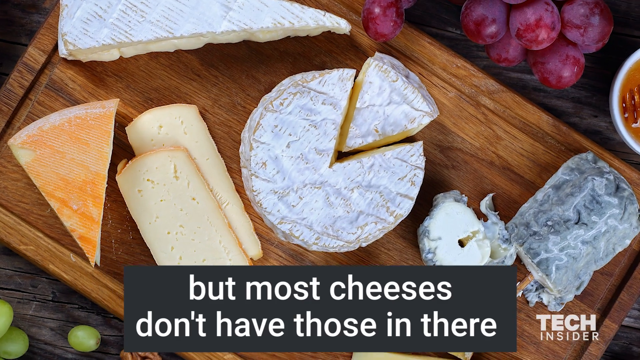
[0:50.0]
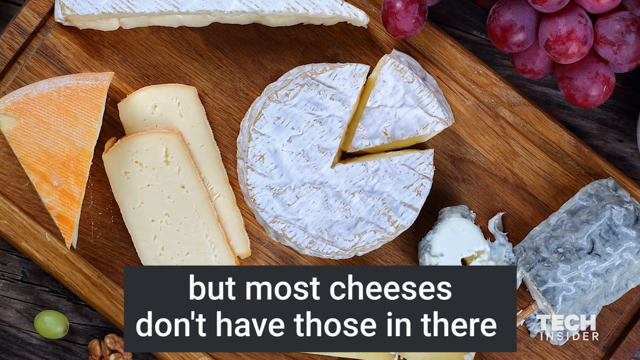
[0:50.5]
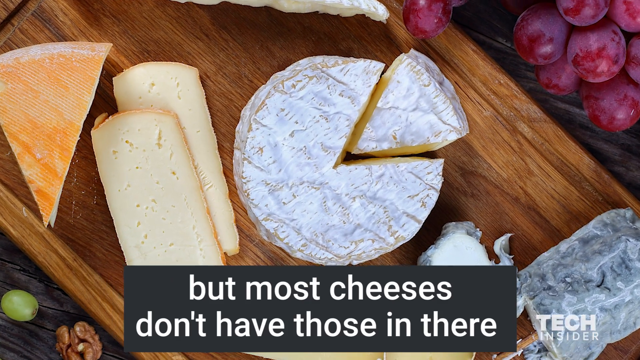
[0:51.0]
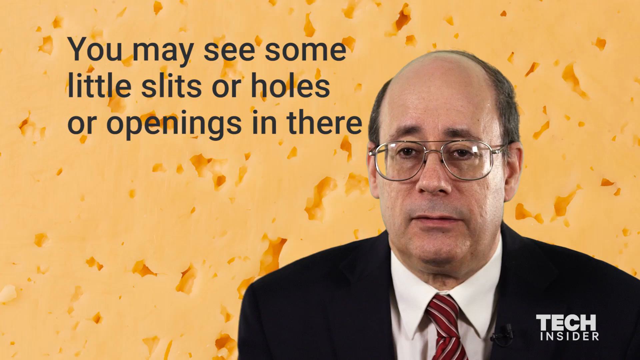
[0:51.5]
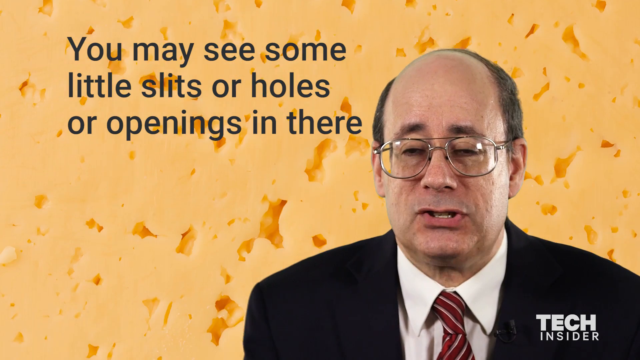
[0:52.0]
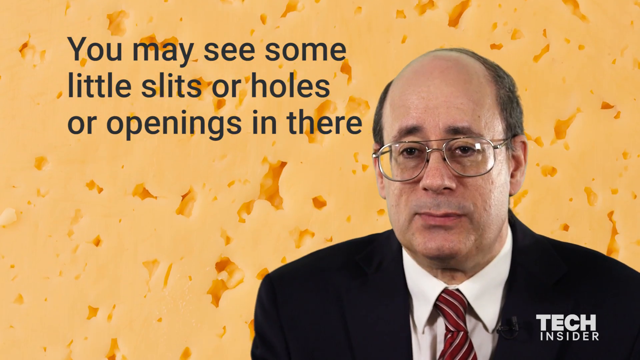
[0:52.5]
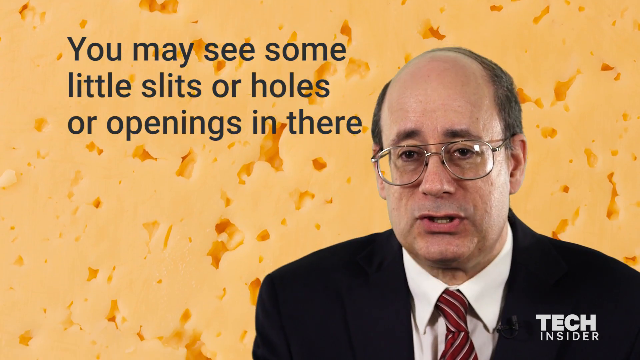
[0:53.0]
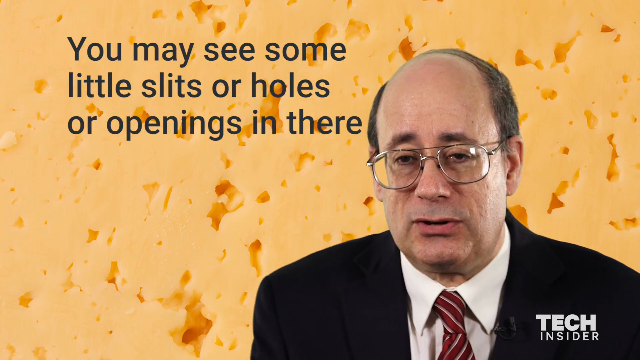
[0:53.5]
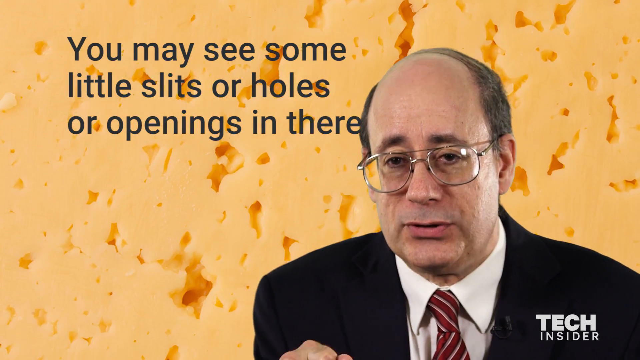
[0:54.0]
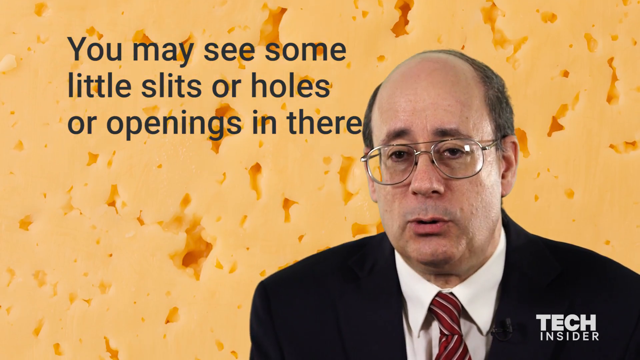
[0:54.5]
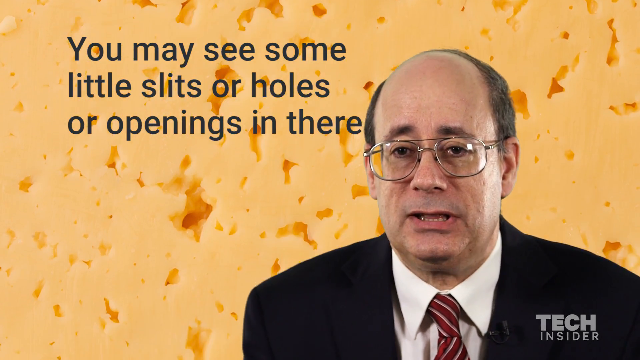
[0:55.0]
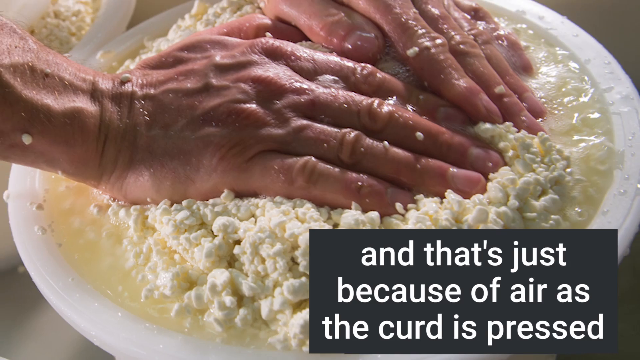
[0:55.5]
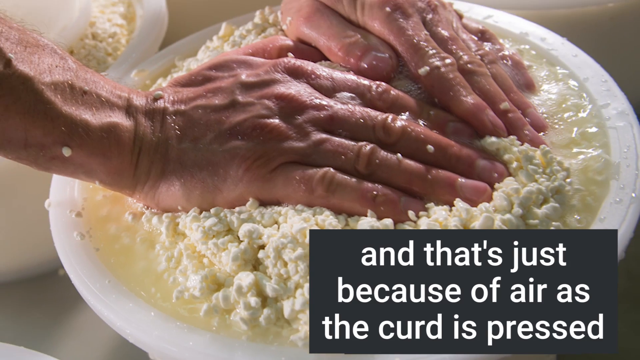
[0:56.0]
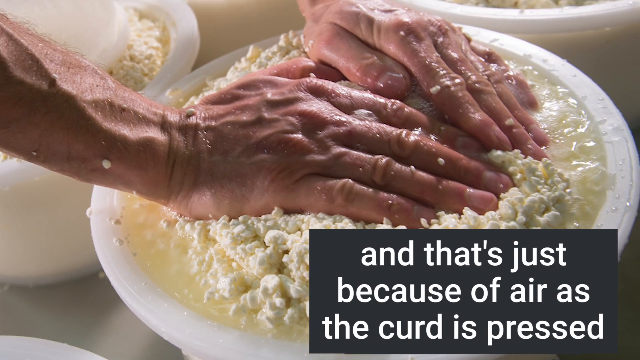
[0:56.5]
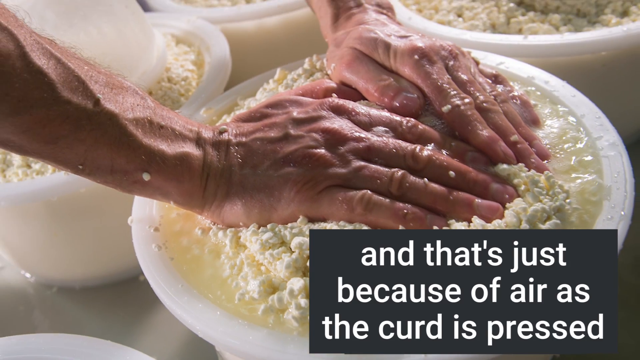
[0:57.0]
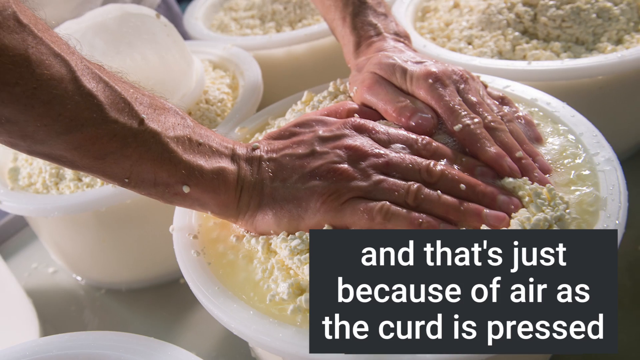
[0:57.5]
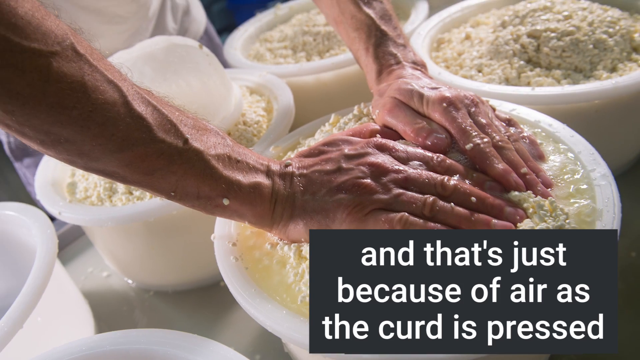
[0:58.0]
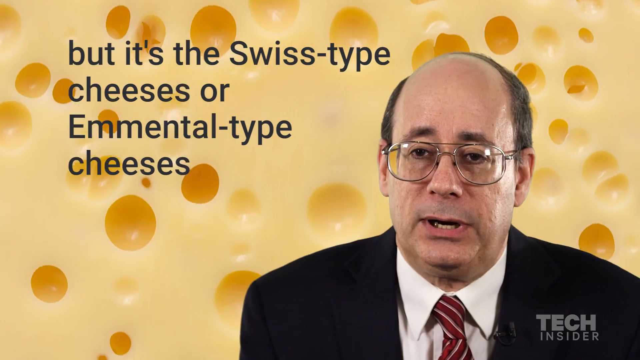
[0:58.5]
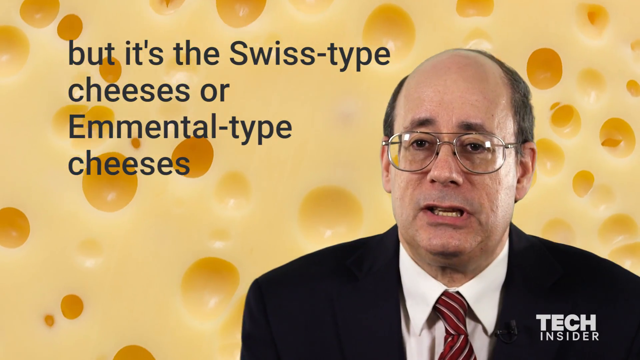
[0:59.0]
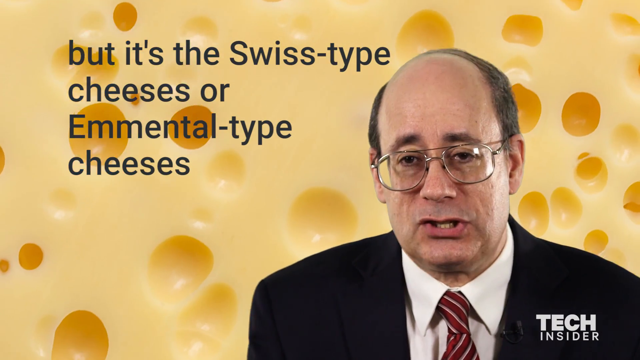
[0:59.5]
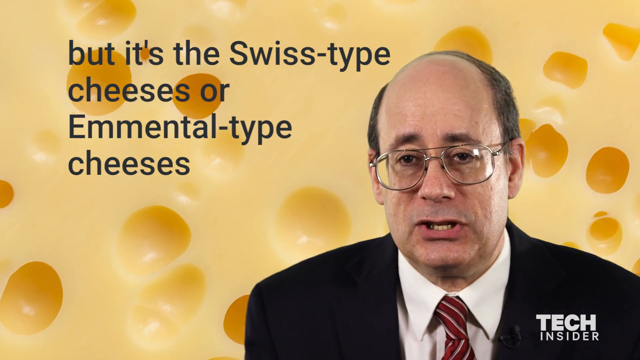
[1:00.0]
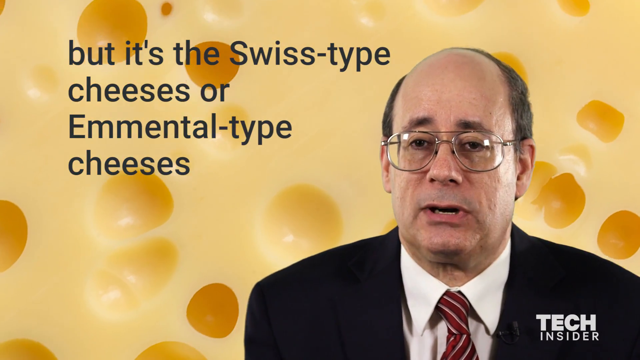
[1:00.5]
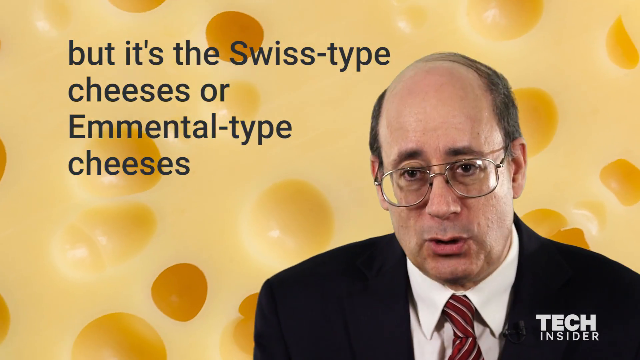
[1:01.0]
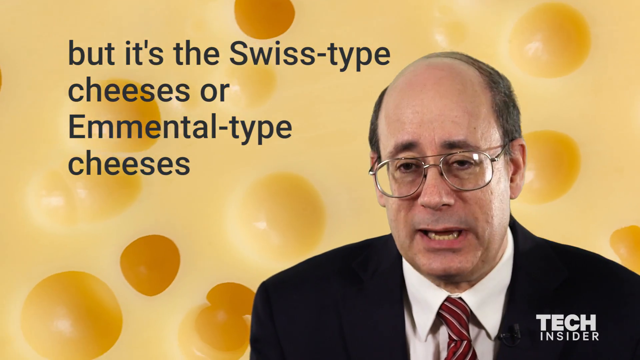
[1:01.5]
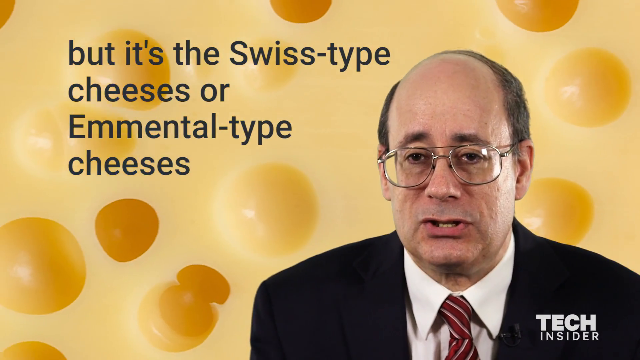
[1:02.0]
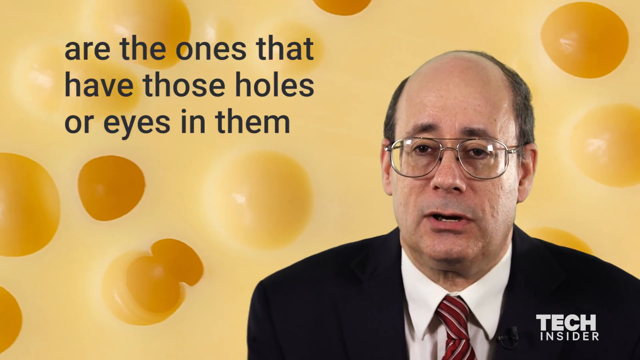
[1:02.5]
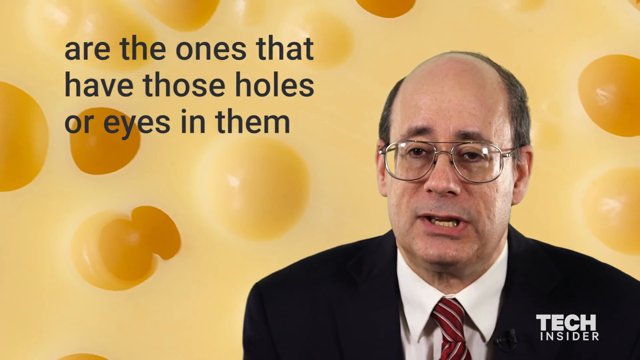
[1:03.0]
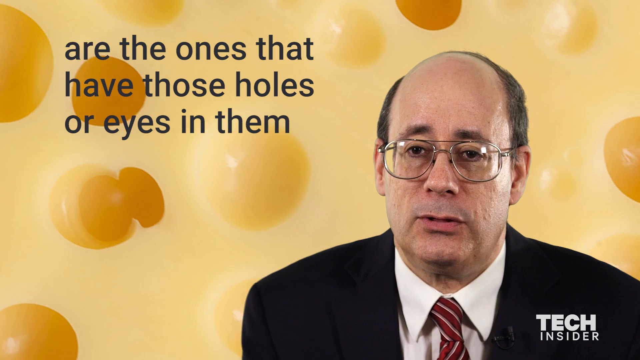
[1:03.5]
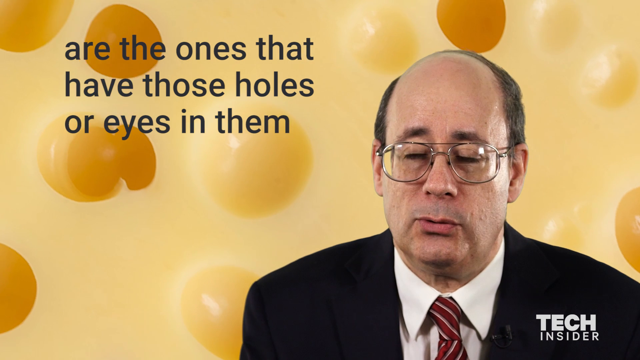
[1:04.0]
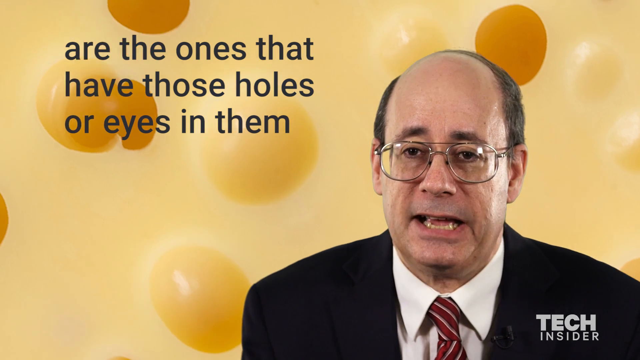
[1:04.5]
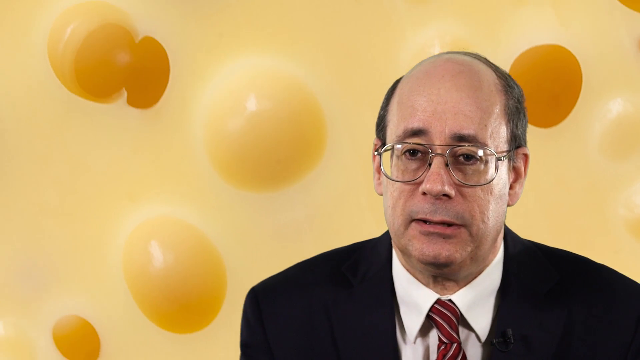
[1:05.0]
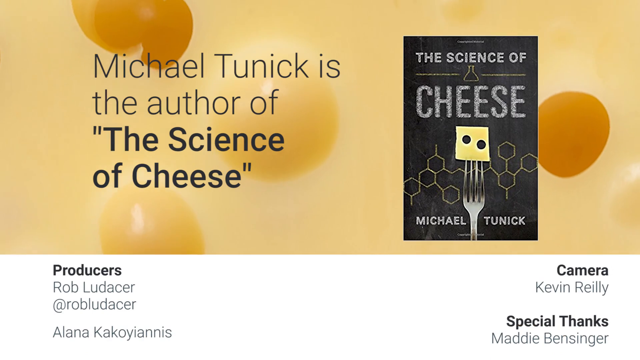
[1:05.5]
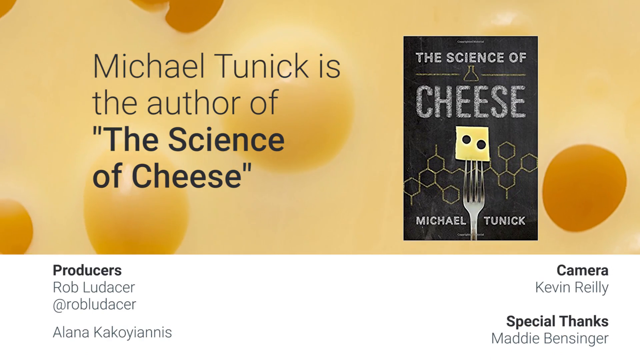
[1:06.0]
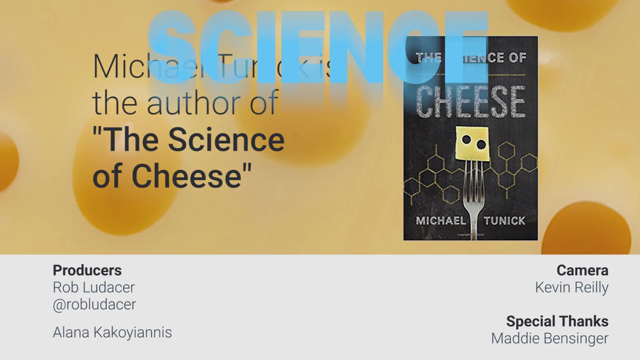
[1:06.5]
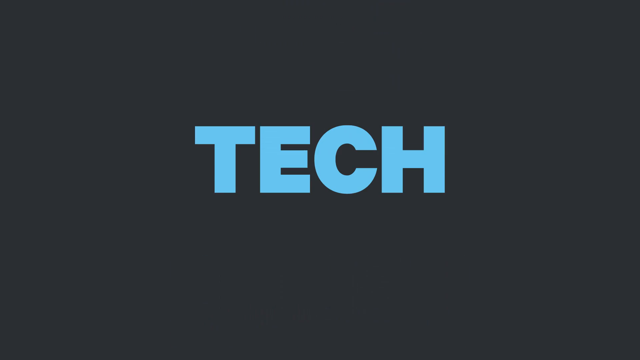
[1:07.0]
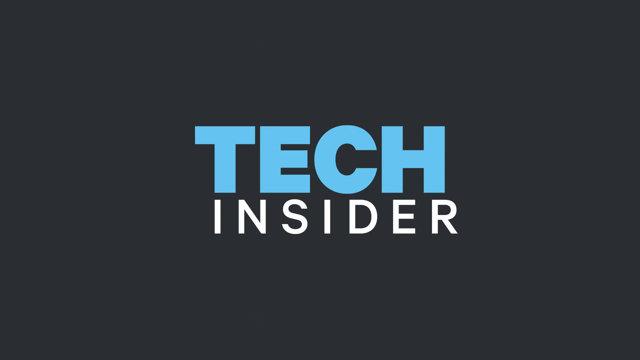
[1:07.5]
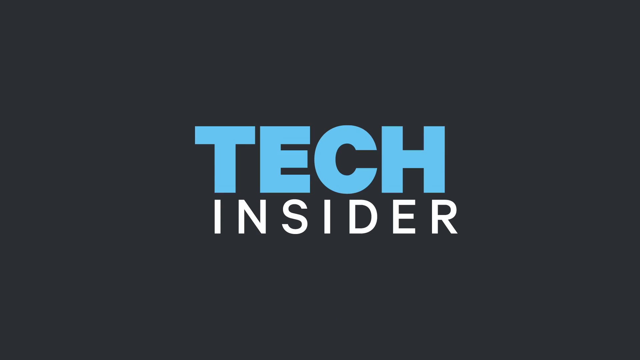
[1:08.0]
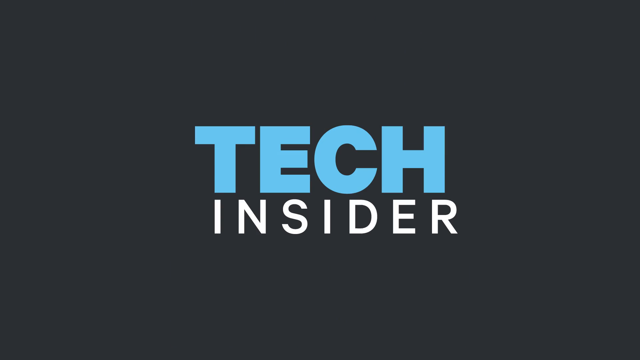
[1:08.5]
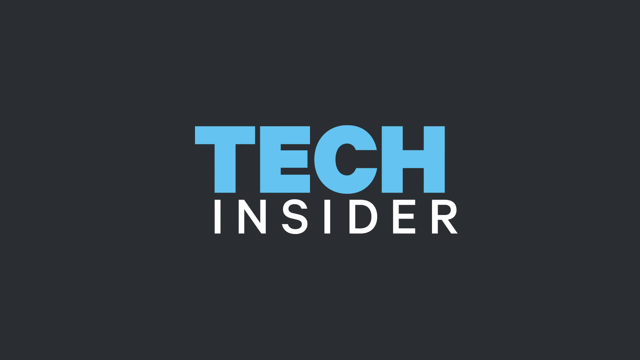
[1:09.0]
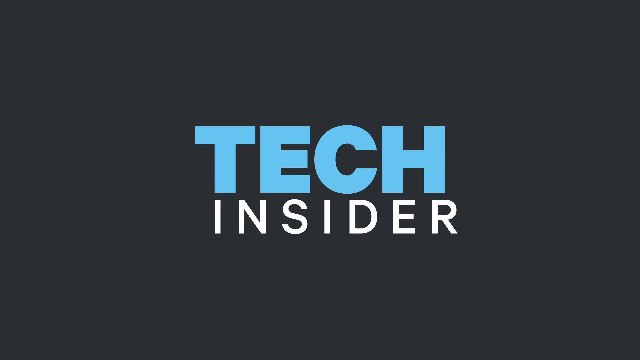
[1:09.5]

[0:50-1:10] Several different types of cheese, in different shapes, sizes and colors, are shown on a very large wooden cutting board. A man in a suit and tie, Michael Tunick, is speaking. His book, The Science of Cheese, is shown on the screen. Grapes in the background are next to the cutting board with all of the cheese on it. A person's hands are placed on top of a bowl of curd. Writing on the screen says: "cheese, you may see some little slits or holes or openings in there and that's just because of air as the curd is pressed, but it's a Swiss type cheeses or Emmental type cheeses are the ones that have those holes or eyes in them."